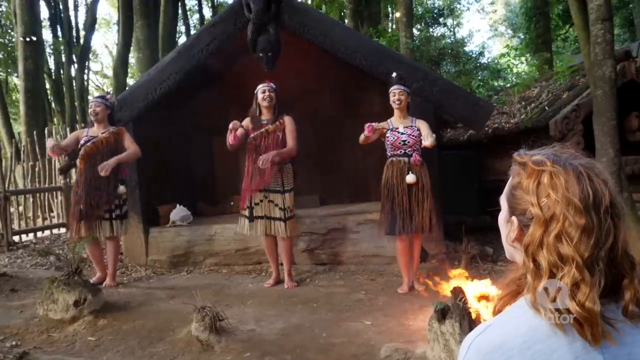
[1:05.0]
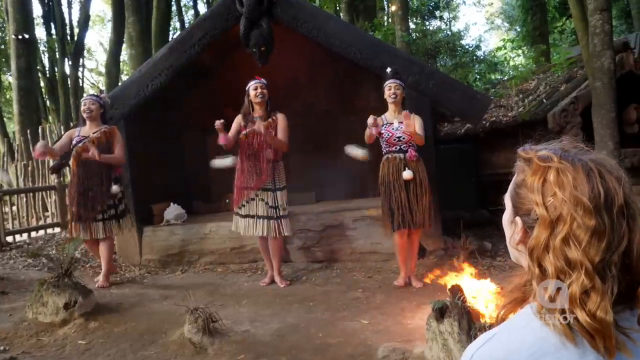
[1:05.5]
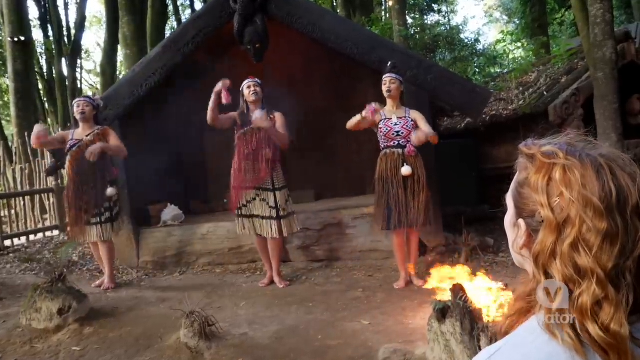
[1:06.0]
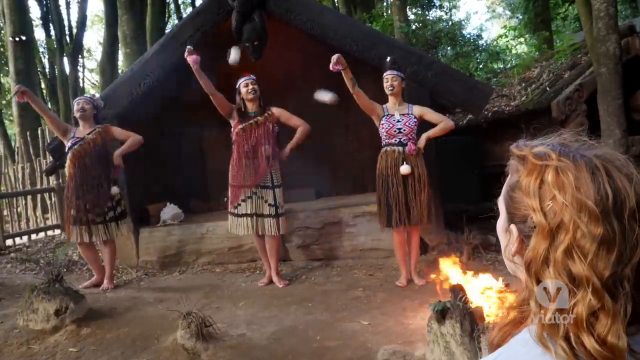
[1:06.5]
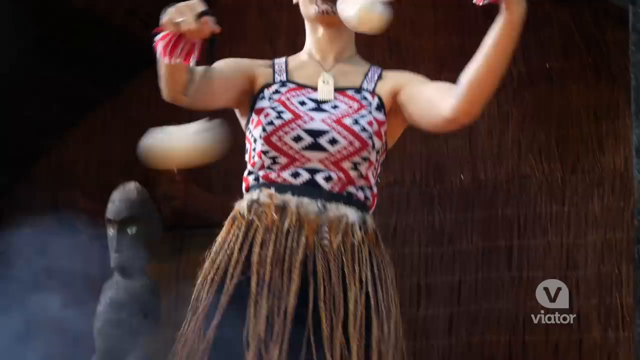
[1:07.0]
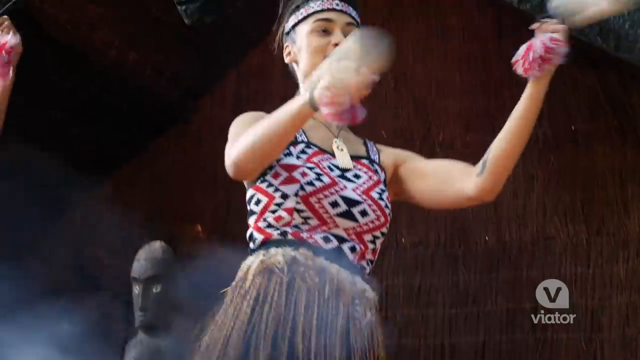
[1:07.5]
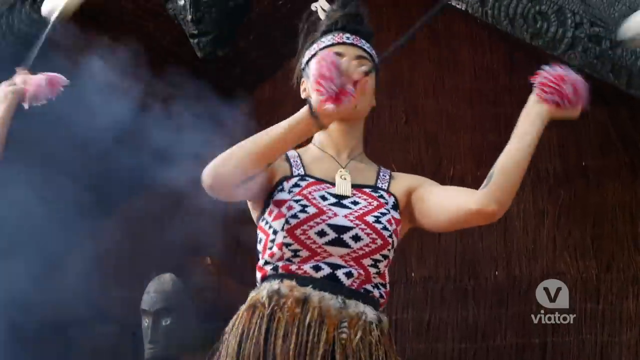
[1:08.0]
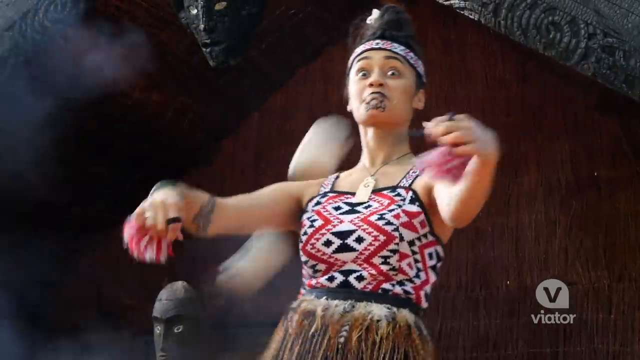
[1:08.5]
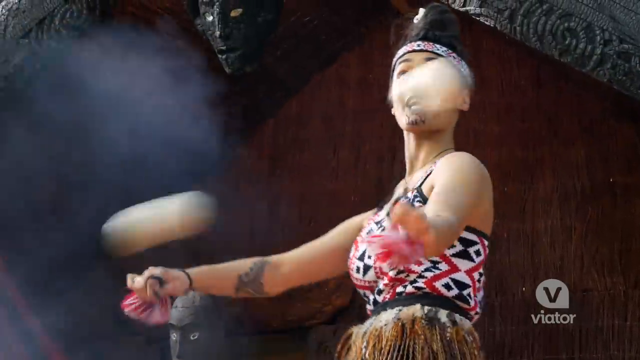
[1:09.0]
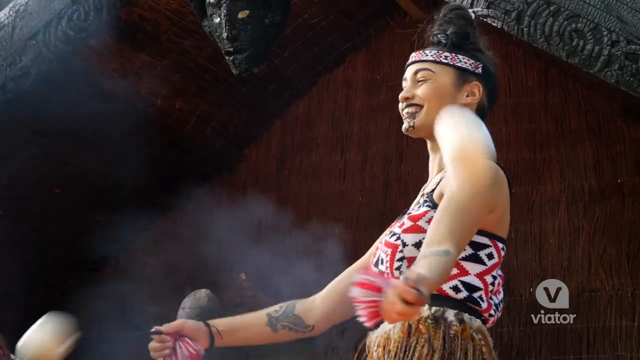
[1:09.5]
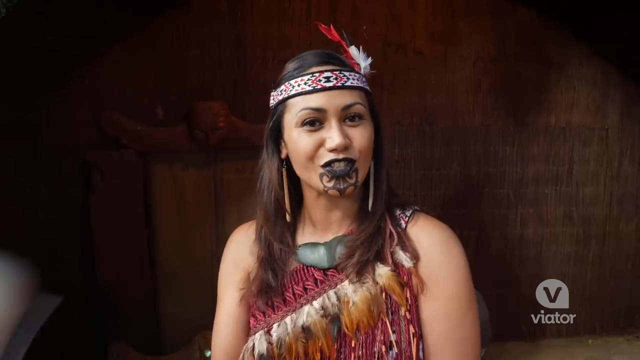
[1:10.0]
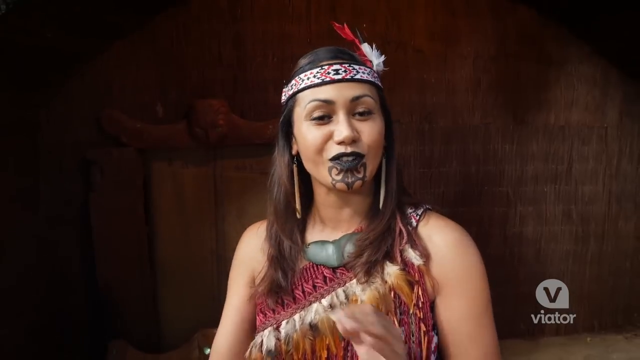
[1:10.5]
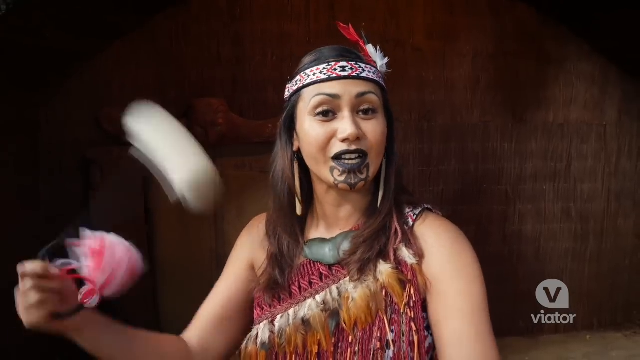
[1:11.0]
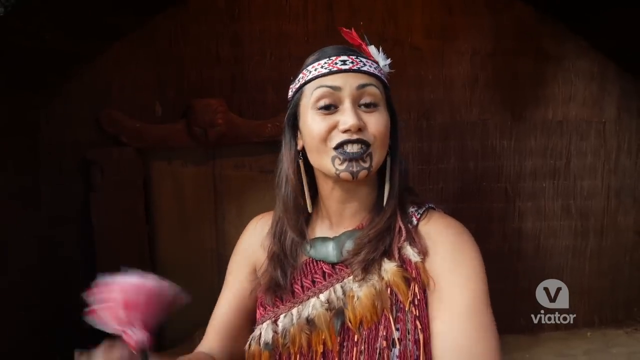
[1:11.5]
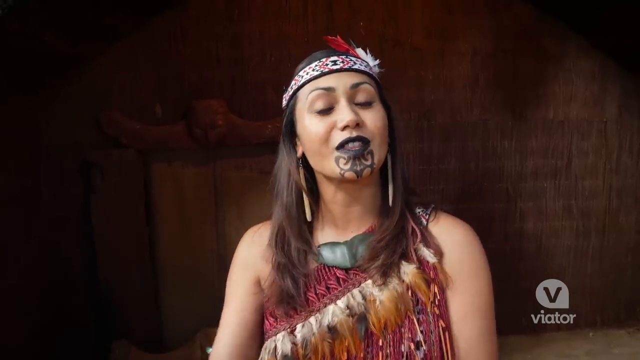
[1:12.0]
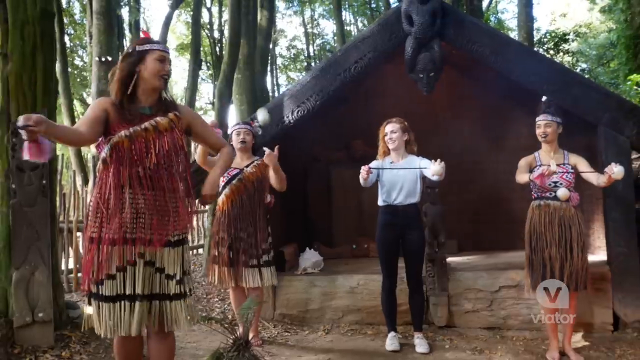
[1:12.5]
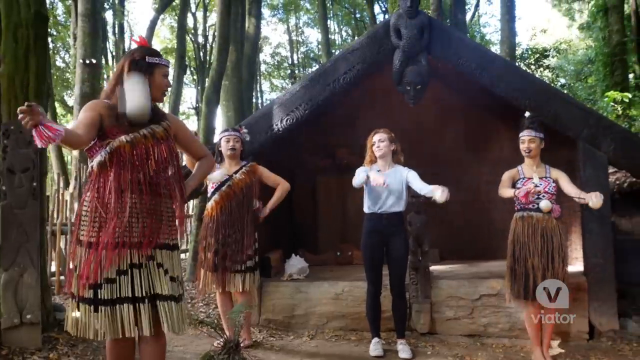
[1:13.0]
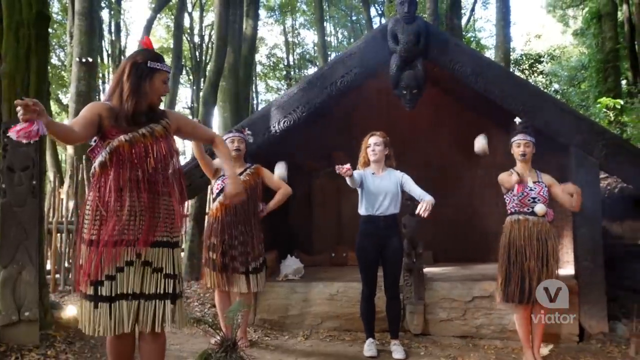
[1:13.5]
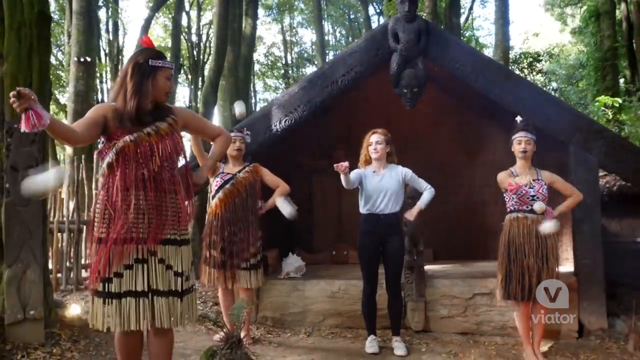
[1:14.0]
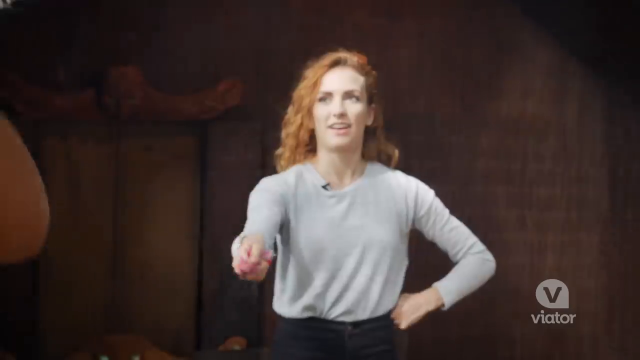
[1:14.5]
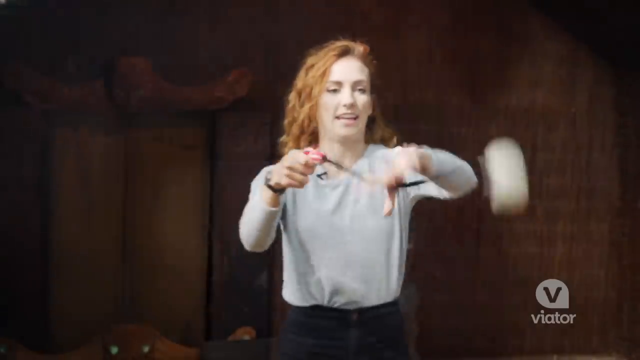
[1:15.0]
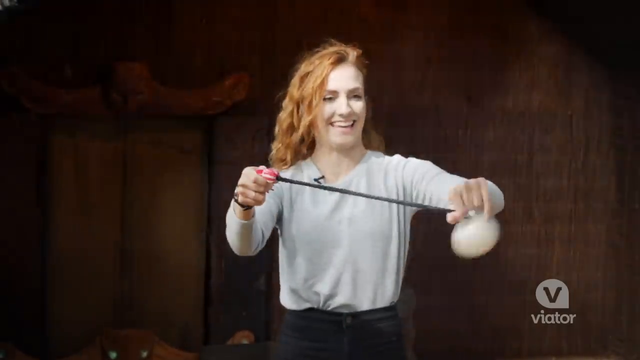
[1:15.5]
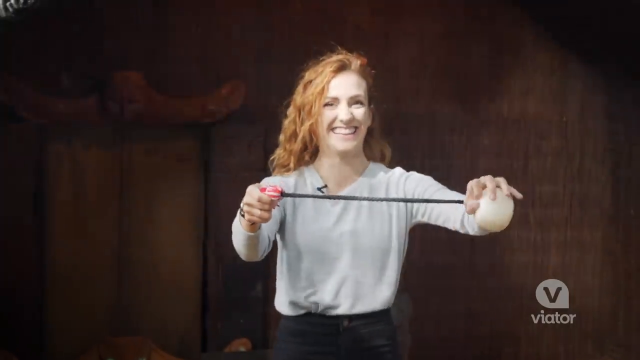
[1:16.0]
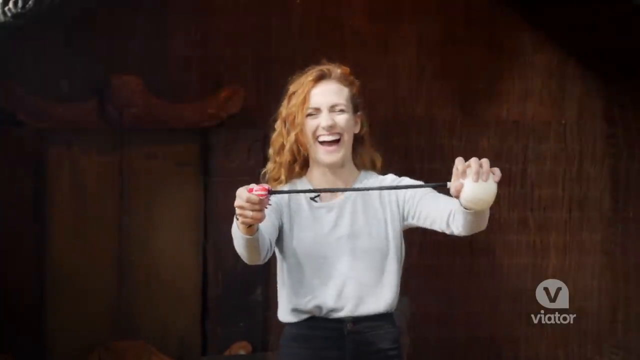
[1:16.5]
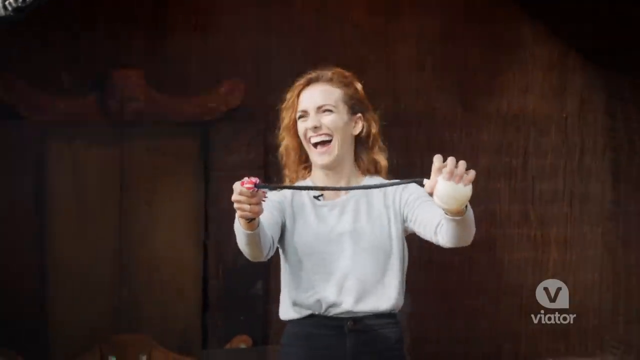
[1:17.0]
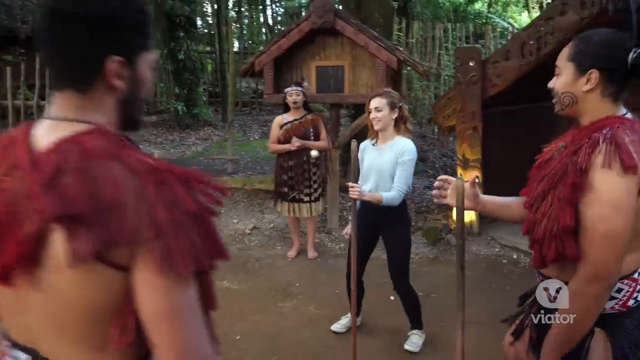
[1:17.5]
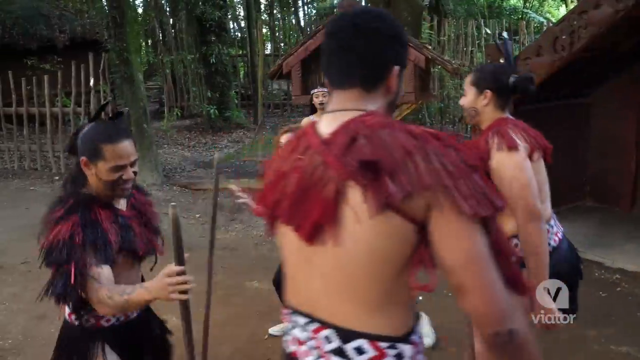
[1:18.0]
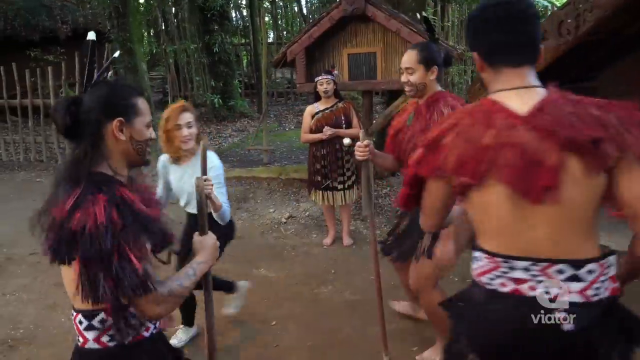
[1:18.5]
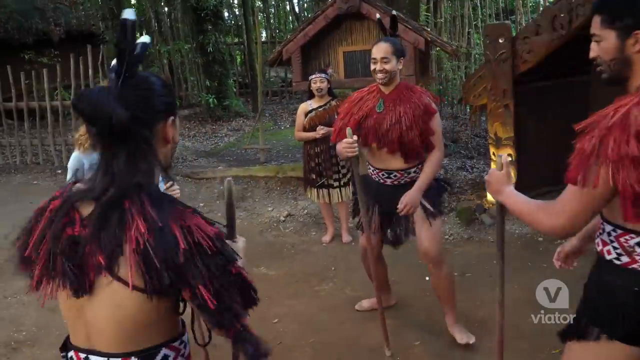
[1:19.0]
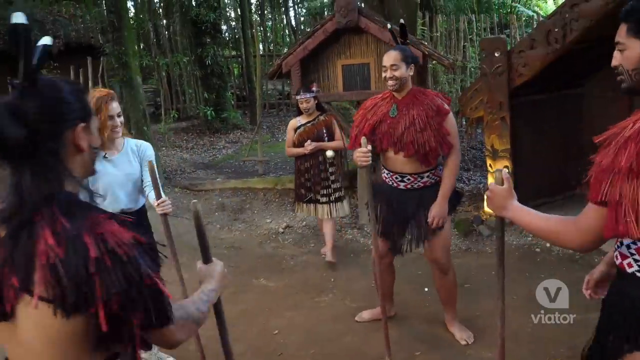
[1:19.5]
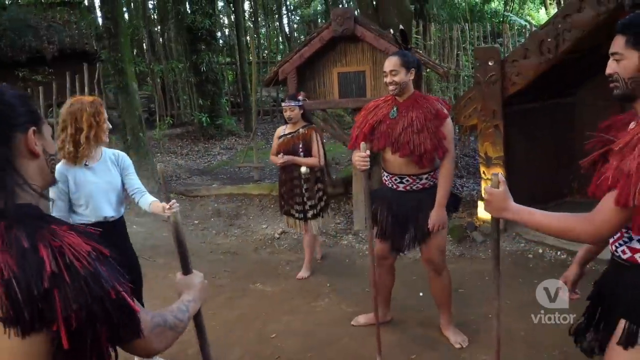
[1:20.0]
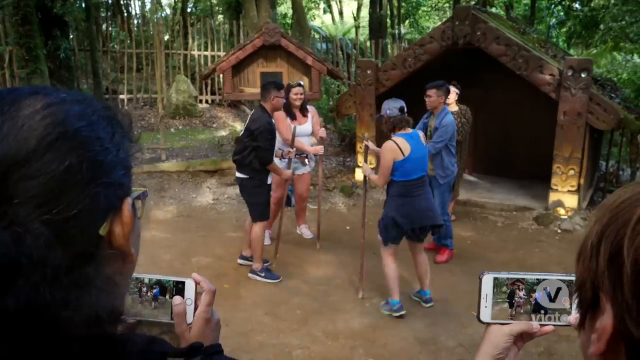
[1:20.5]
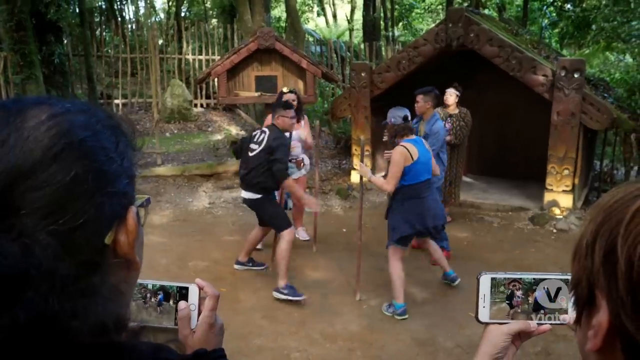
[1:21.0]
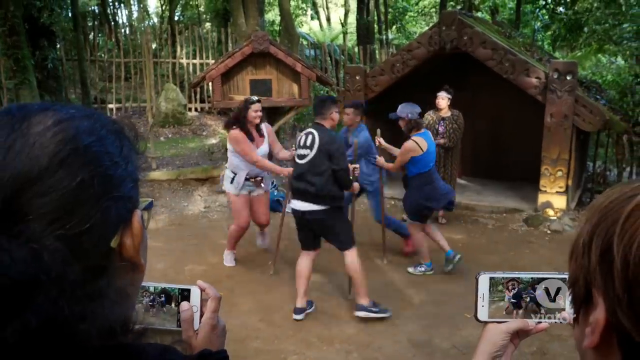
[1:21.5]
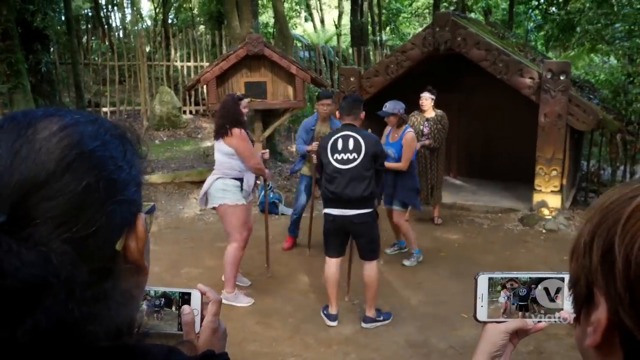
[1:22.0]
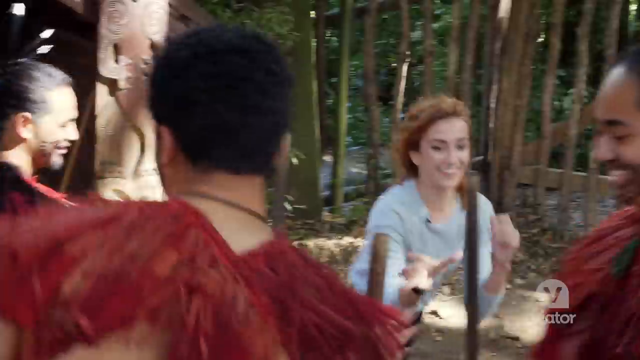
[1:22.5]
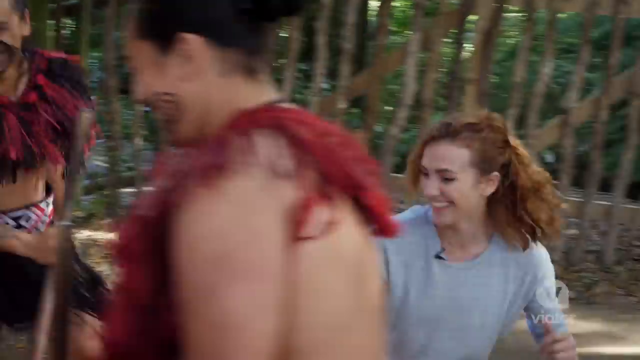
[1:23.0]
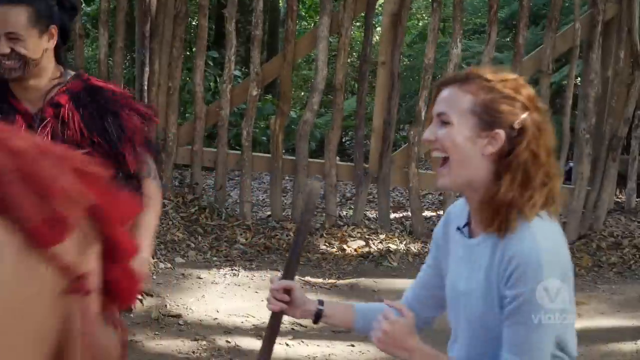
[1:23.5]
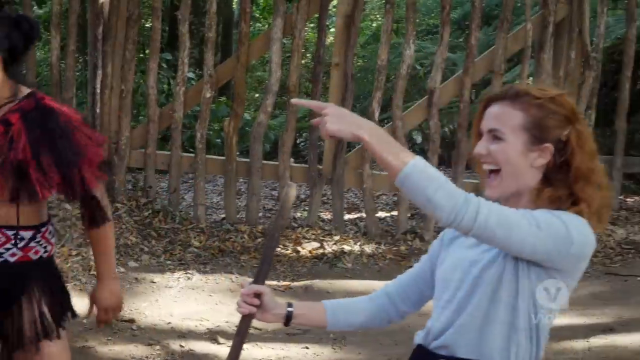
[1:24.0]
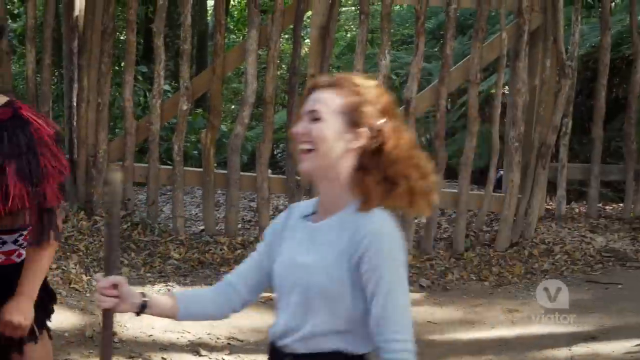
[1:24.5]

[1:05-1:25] The three native women swing their balls on strings, and one of them talks to the camera in a close-up on her bust. She has a black ink design on her face, wears a dress with feathers on it and a headband with feathers, and demonstrates how to swing the balls. The host stands behind her, between the other two women, attempting to swing the balls the right way; she smiles and laughs, then stops the ball and laughs. Next the host is in a circle with three men and sticks, going around in a circle, while four other audience members, apparently two women and two men, also go around in a circle with sticks. The shot pans to the host in her circle laughing and pointing at someone. The background is woods with lots of trees, the stick fence behind them and different types of structures.